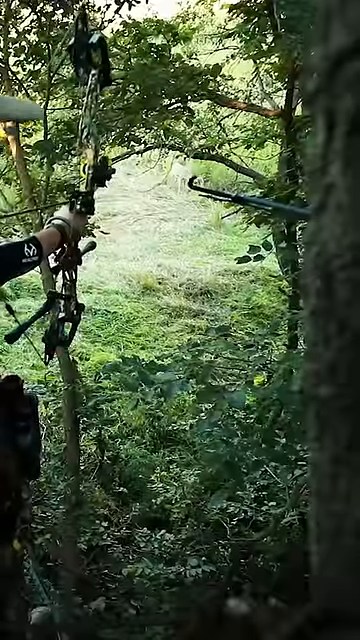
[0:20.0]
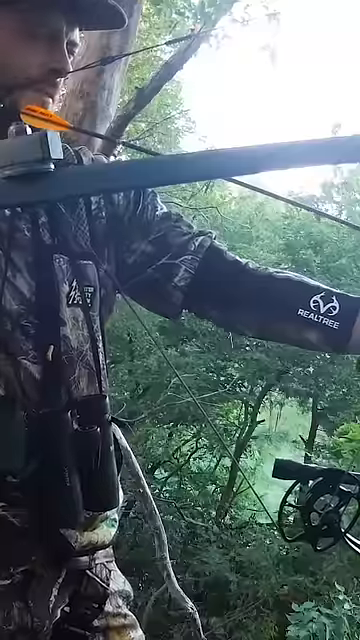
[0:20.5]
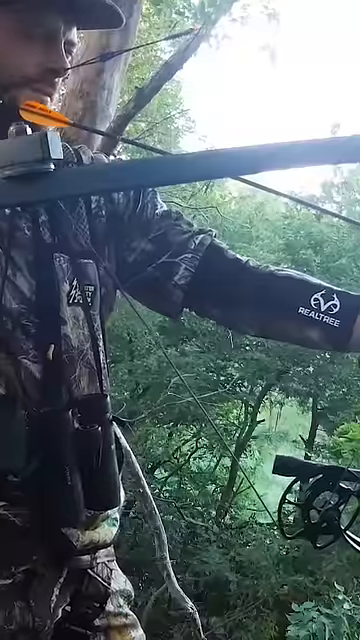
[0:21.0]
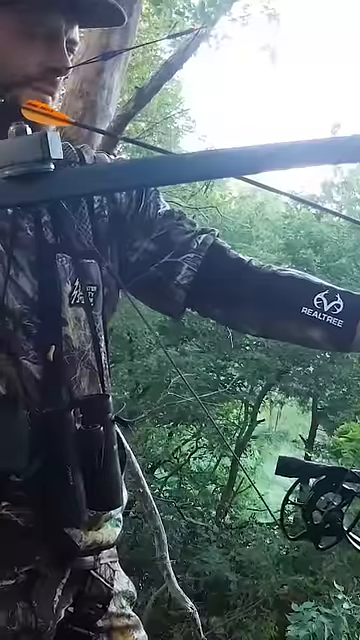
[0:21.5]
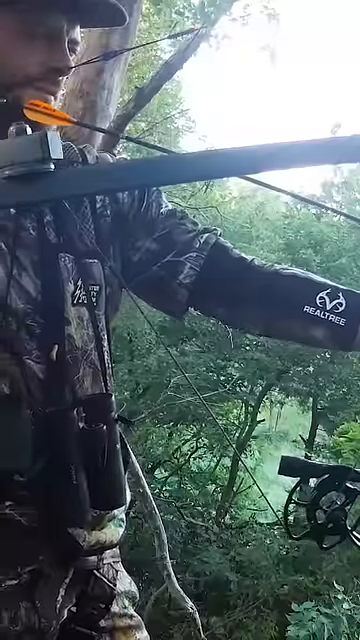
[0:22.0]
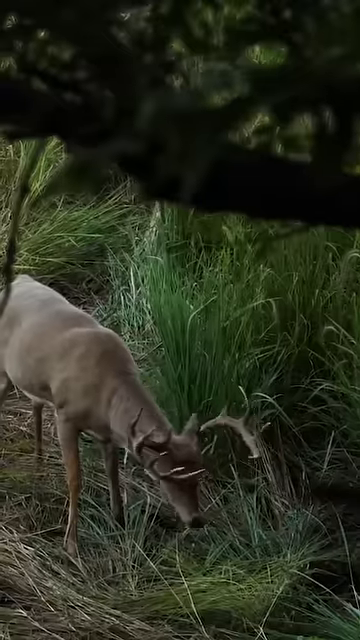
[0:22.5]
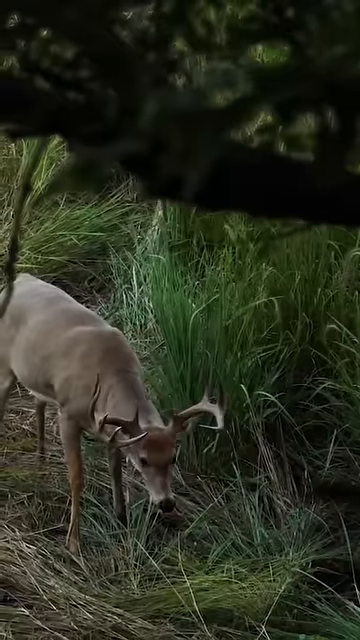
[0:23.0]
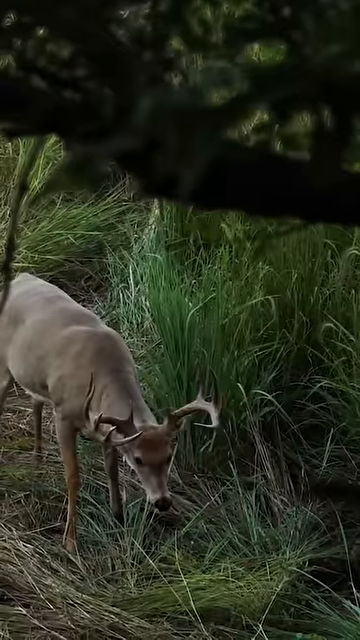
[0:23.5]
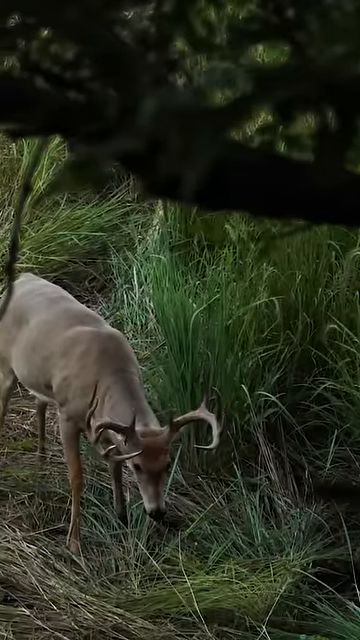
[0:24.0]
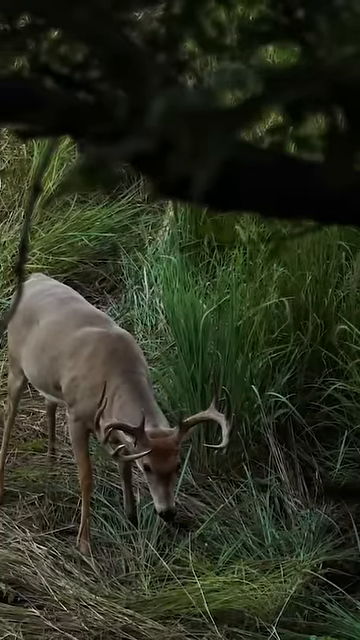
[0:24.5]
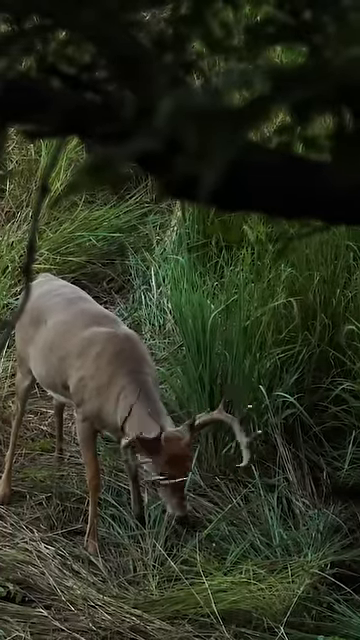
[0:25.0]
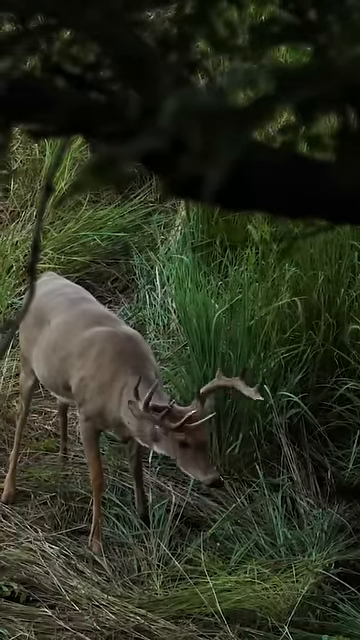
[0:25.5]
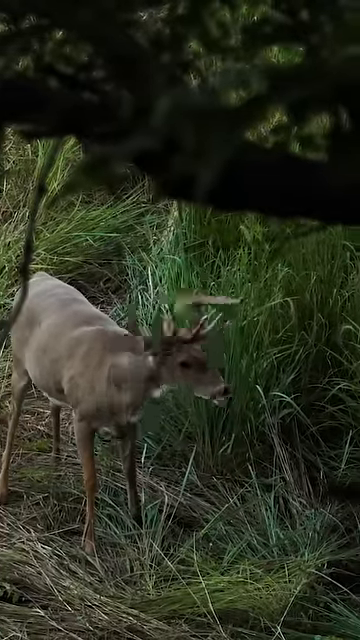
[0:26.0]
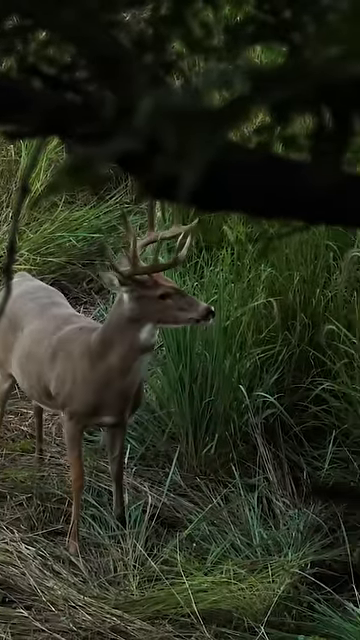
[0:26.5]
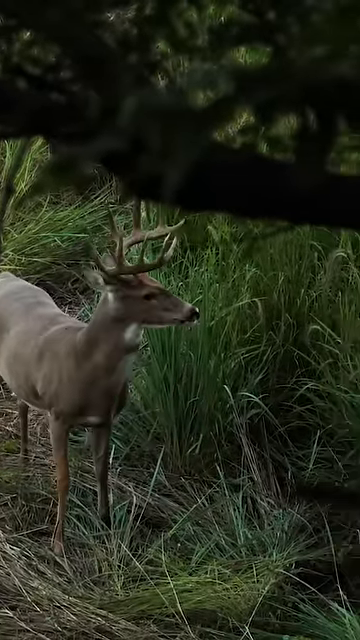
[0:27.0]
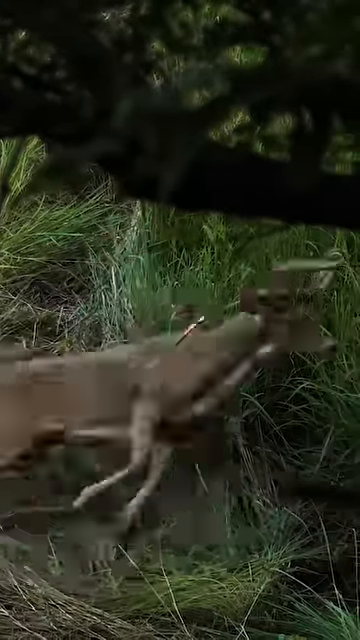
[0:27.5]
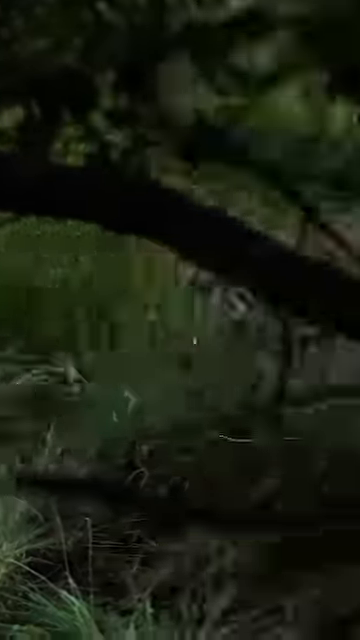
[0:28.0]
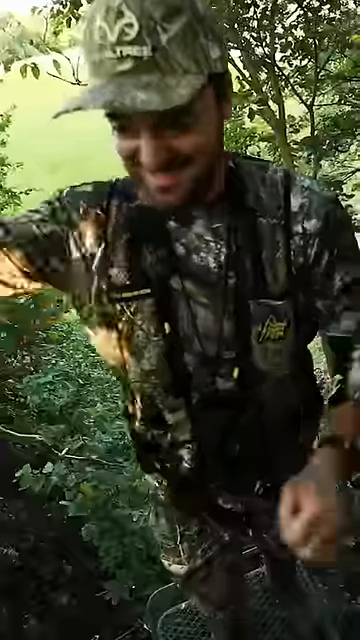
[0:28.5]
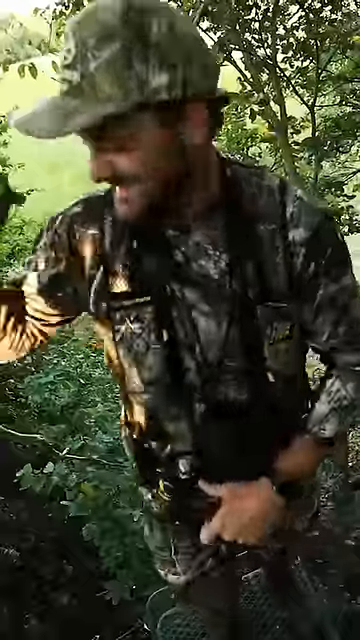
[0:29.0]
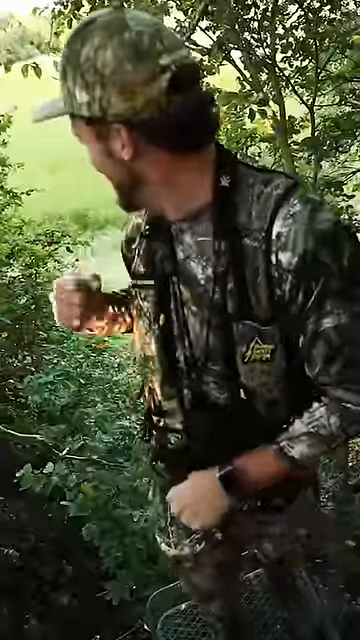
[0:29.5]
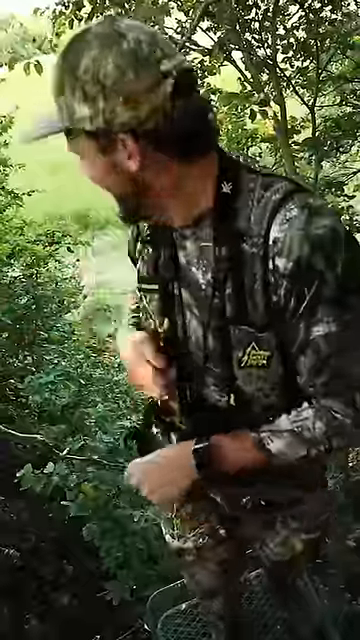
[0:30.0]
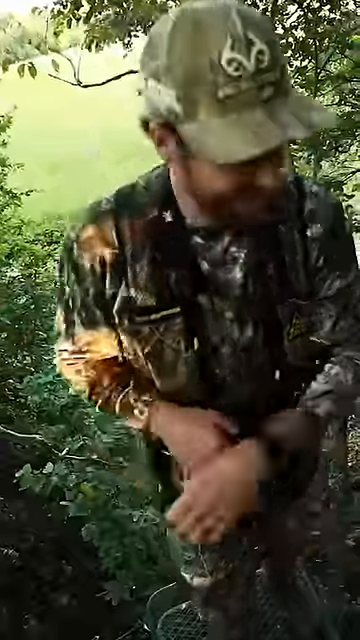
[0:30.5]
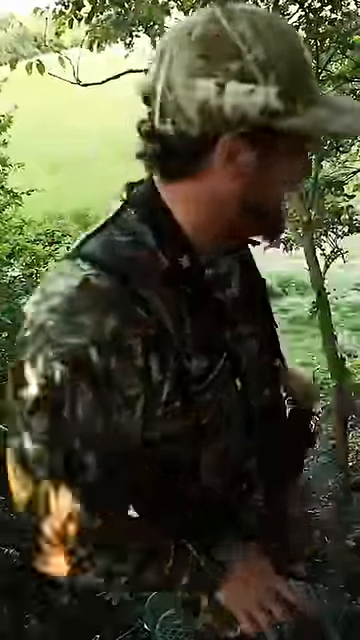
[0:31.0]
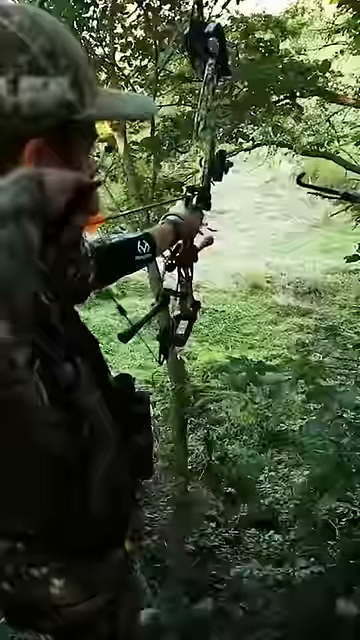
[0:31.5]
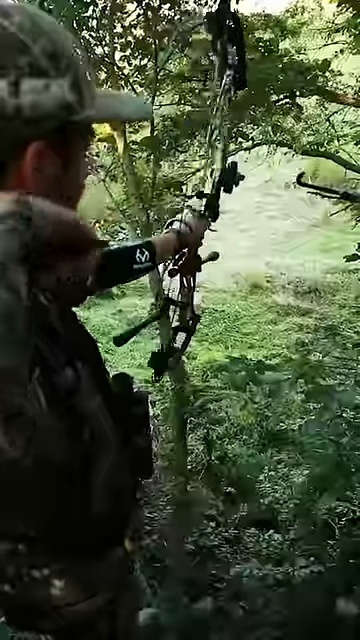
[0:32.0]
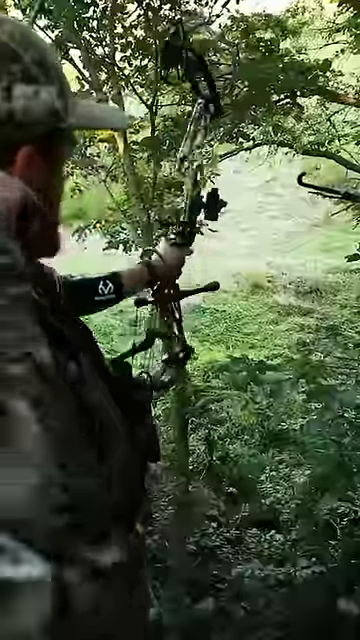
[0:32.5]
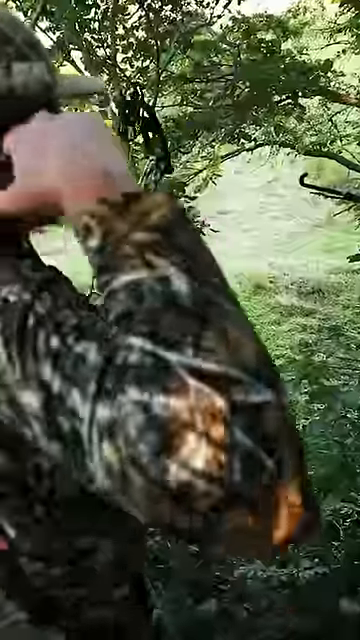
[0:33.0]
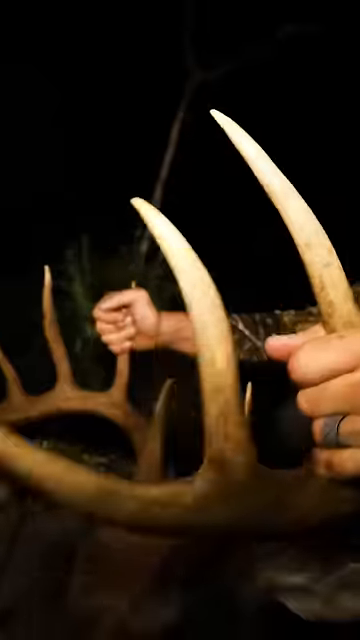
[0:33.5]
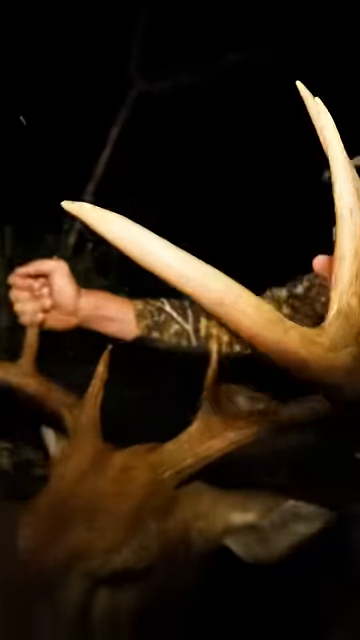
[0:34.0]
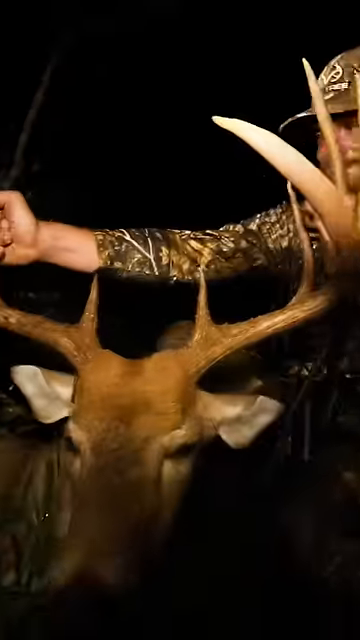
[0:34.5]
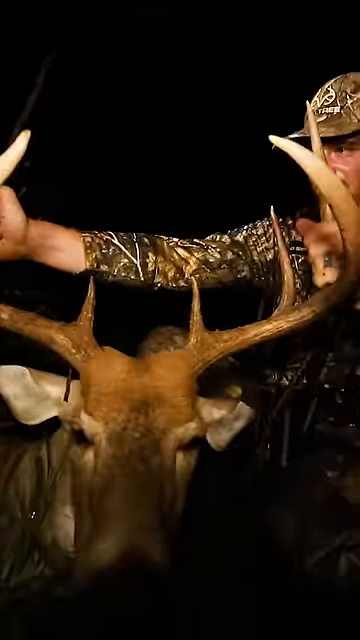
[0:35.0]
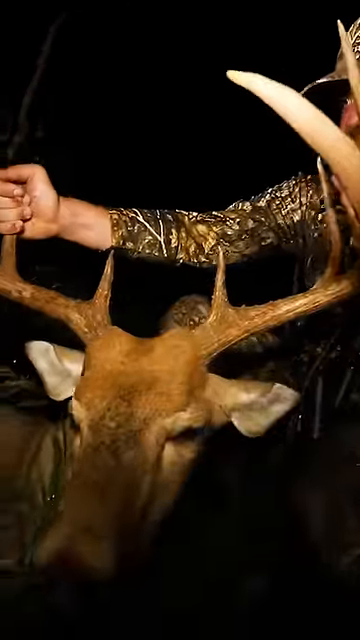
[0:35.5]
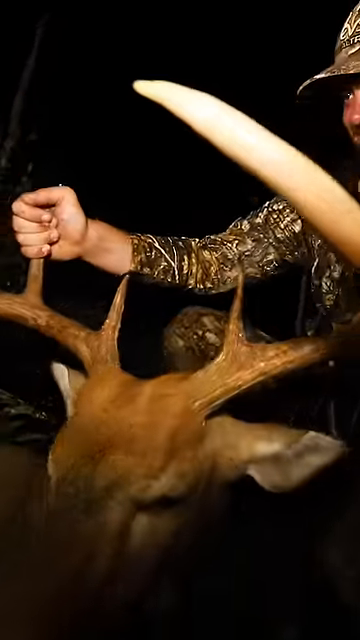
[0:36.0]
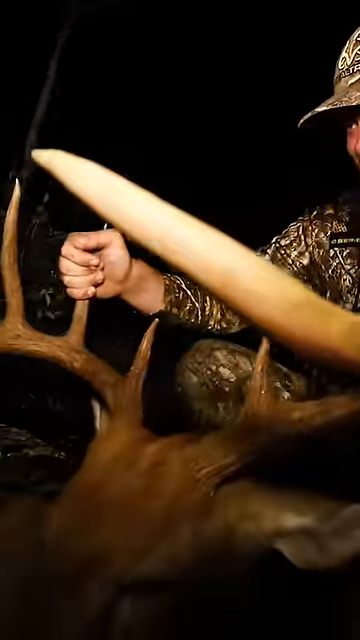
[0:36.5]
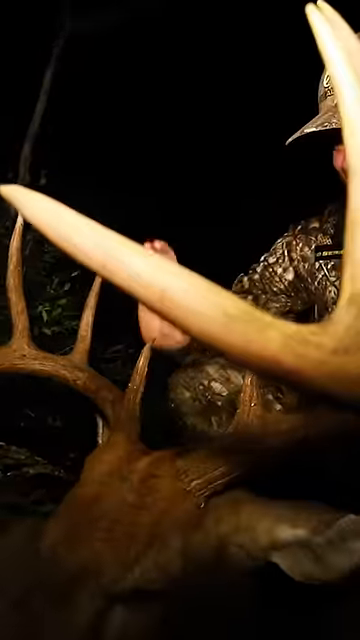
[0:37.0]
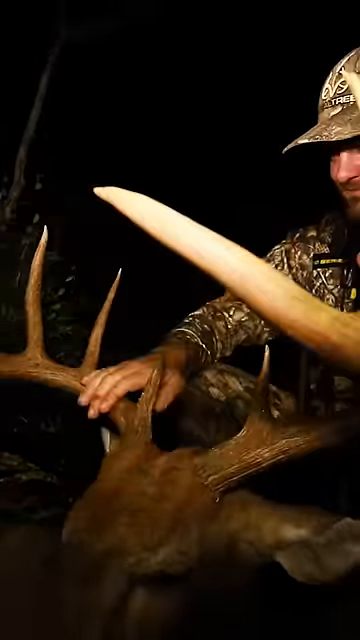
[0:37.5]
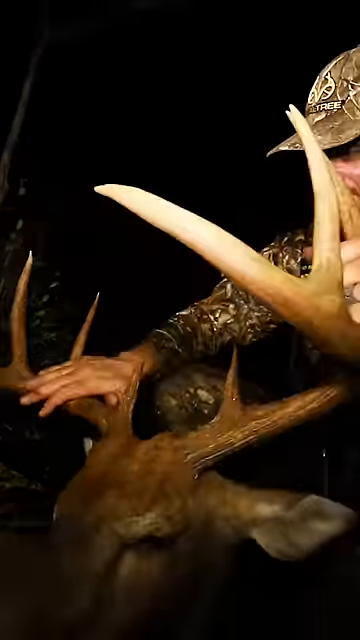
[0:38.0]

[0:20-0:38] The hunter points a bow and arrow toward a deer, and the deer appears to see the hunter with his bow and arrow. The deer then runs away very quickly. The scene transitions back to the hunter, who smiles with a look of satisfaction and pumps his fist in the air, apparently having caught the deer. He then holds up the deer's antlers and totes them around, seemingly celebrating. Black stripes run down the left and right sides of the frame, suggesting it was filmed on a phone.